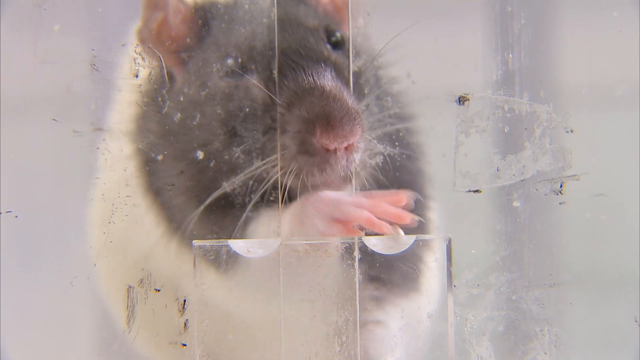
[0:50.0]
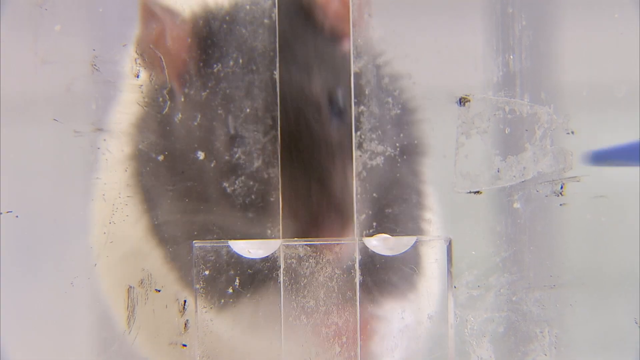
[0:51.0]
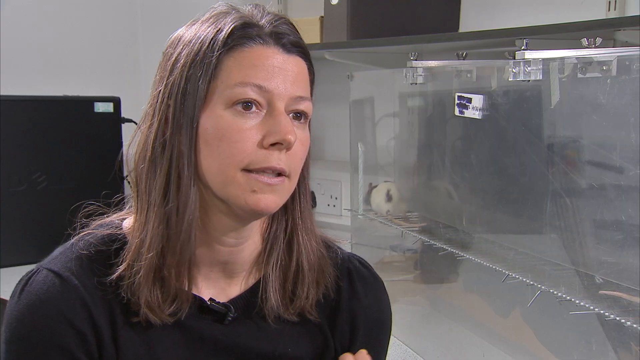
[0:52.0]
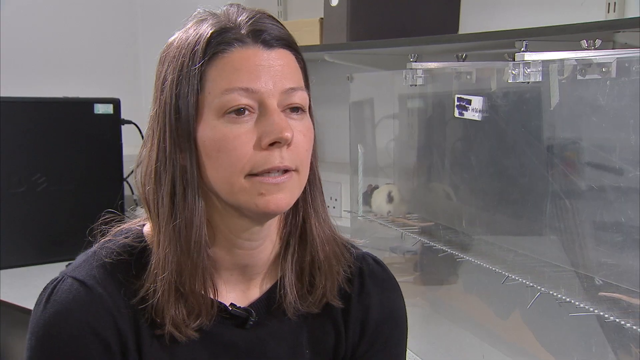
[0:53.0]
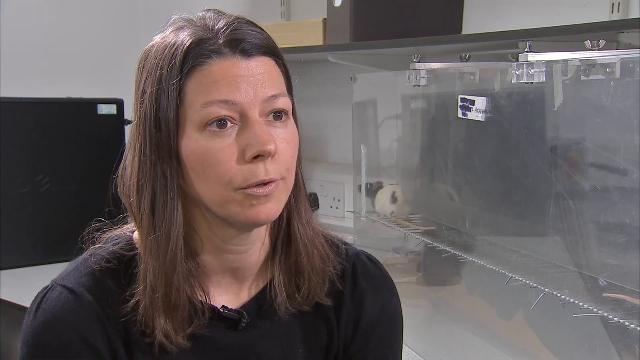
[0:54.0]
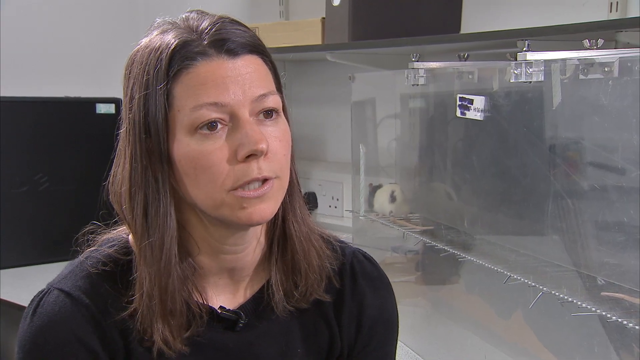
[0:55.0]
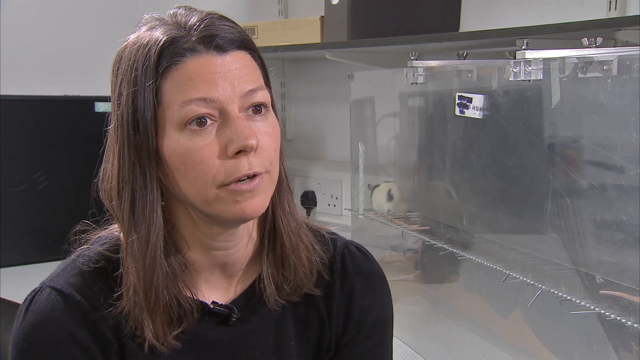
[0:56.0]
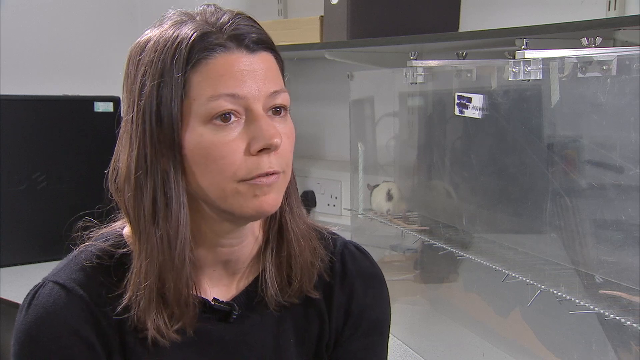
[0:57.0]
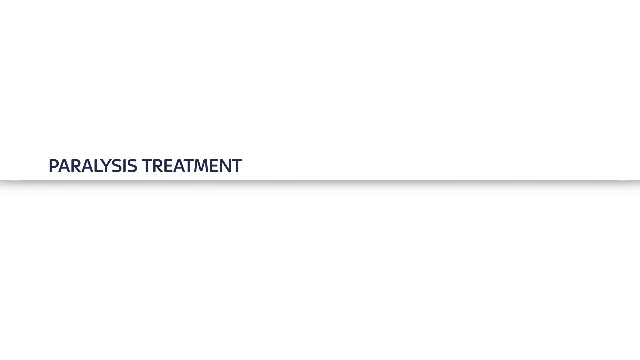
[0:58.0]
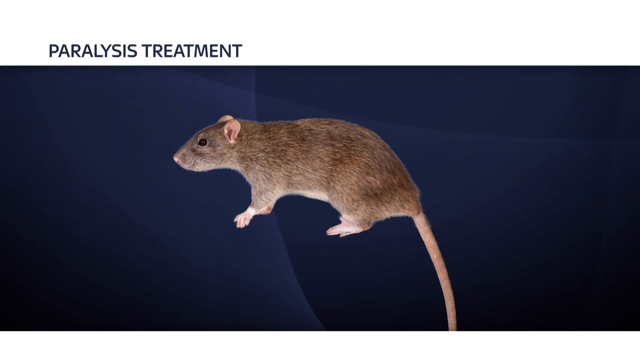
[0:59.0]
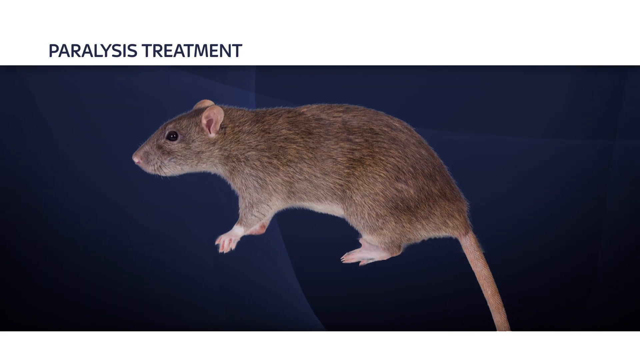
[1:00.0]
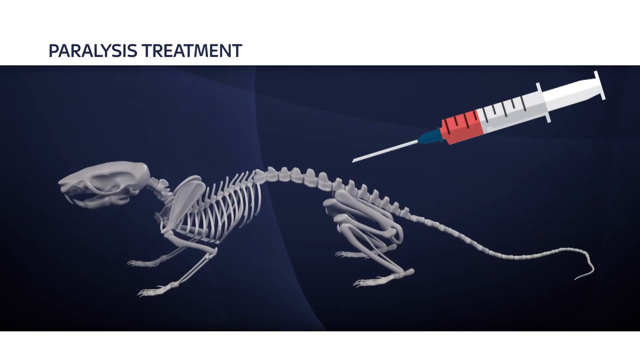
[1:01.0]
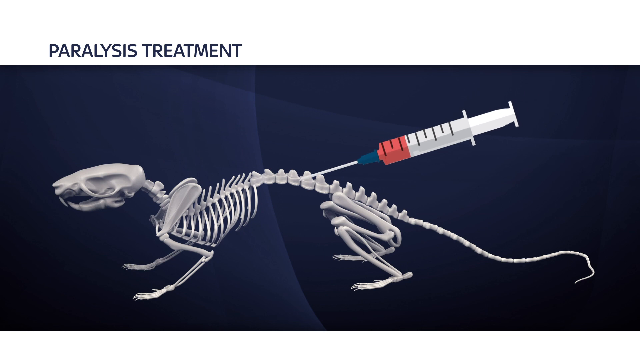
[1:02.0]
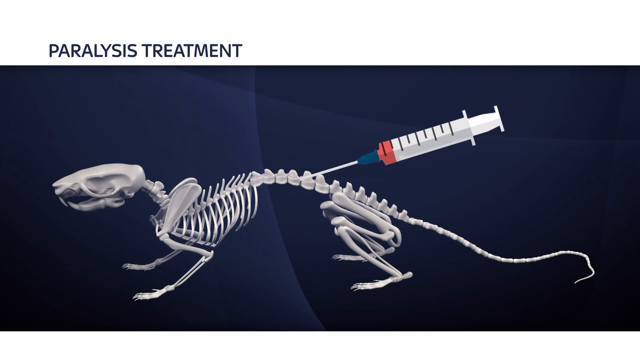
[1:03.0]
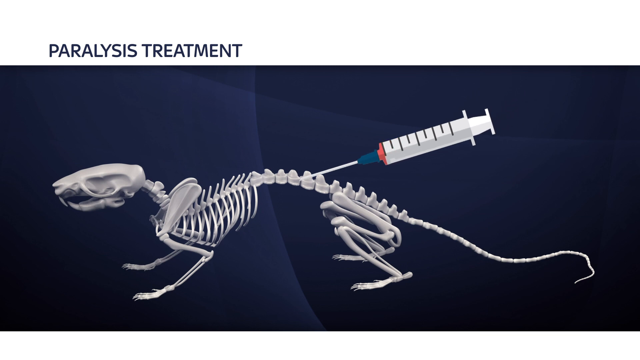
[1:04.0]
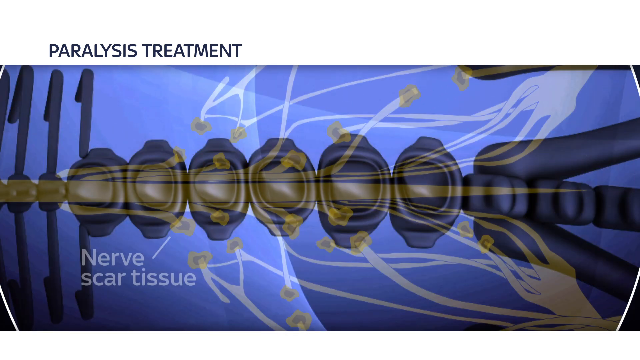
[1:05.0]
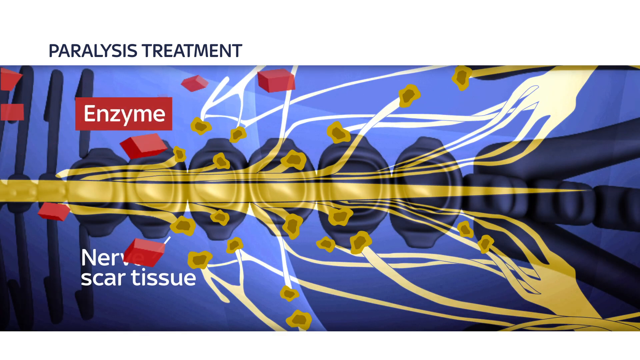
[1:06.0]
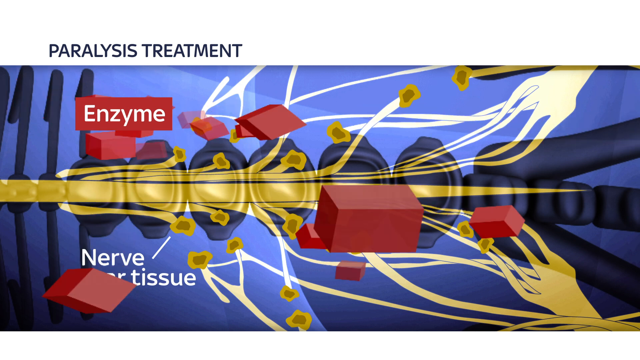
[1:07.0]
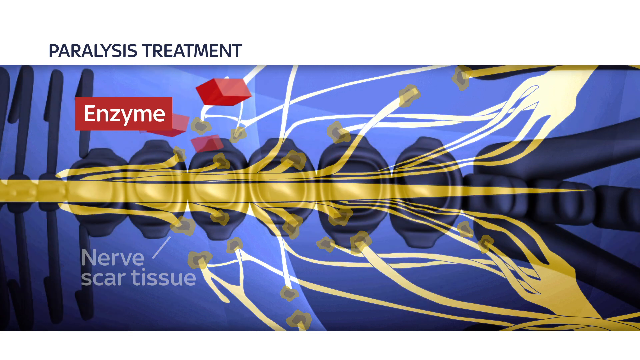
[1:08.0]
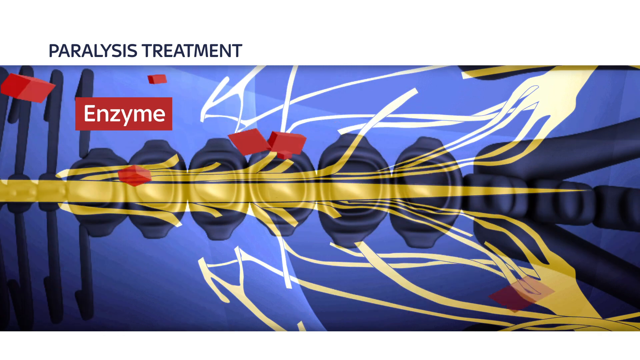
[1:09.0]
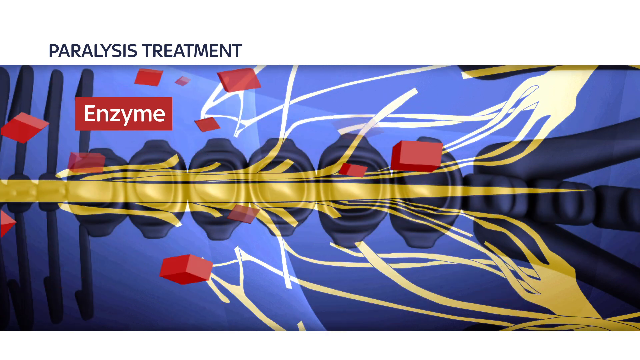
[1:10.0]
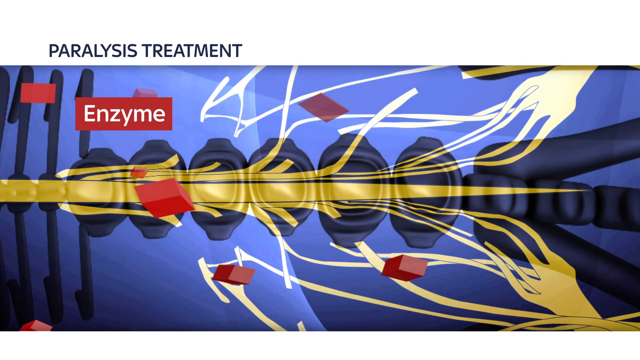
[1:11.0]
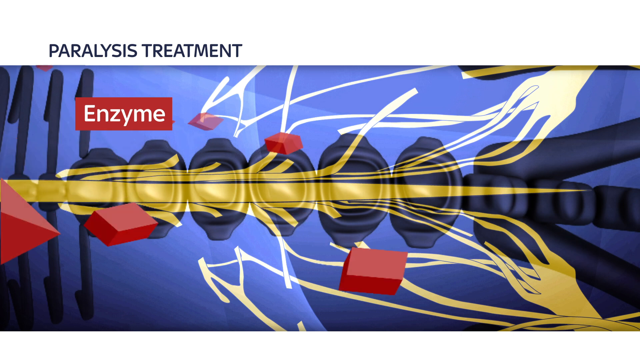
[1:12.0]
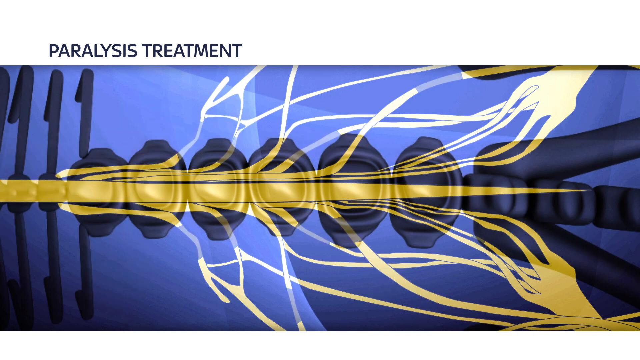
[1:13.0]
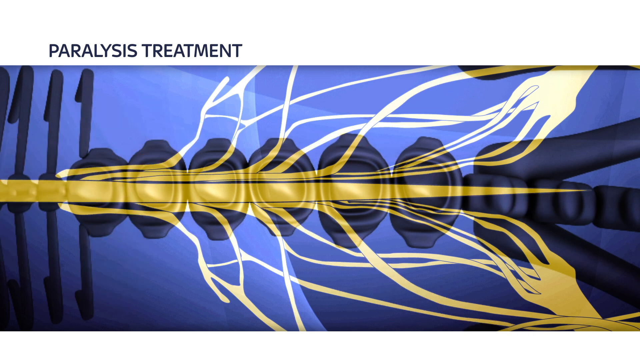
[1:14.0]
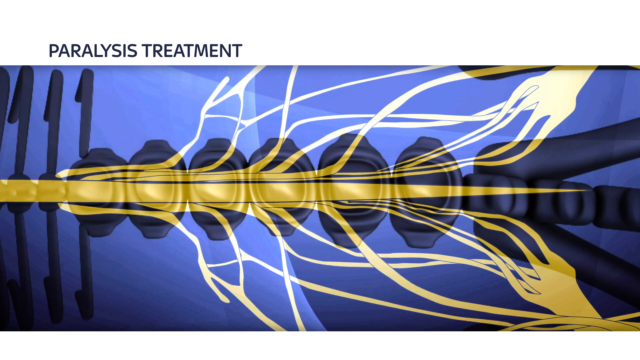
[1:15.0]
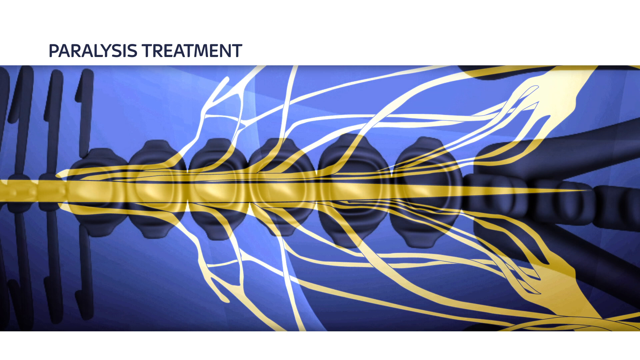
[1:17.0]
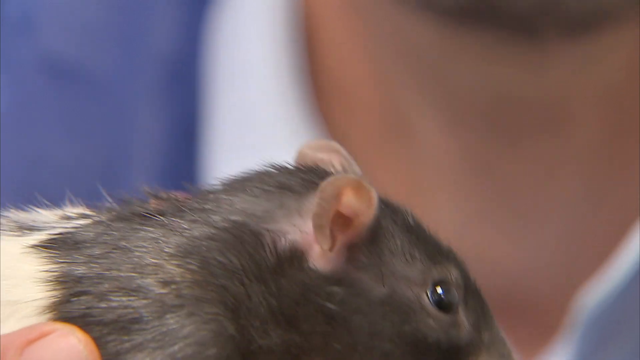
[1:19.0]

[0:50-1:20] A rat tries to get food from outside the cage, and the video cuts back to the brown-haired woman talking to the camera. A computer is behind her, and on the right is a big plastic- or glass-looking cage with one white and brown or black rat inside, looking around. A computerized image of a rat on a blue background appears, with "paralysis treatment" written at the top. The image changes to the rat's full skeleton, with a cartoon-looking needle injecting a red solution into the rat's spine. It then shifts to a computerized close-up of the rat's spinal cord, with the words "enzyme" and "nerve scar tissue" labeled next to the parts of the skeleton they refer to. "Enzyme" is written on a red background with a border, and "nerve scar tissue" is written in plain white. Little red cubes fly out from the word "enzyme". The video then cuts to footage of one of the rats.